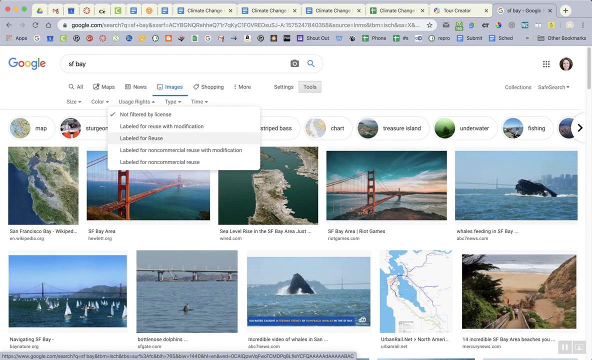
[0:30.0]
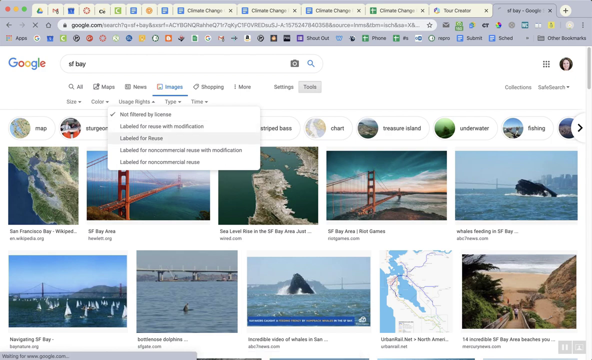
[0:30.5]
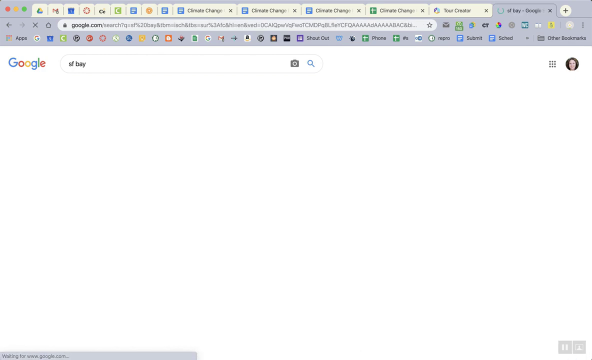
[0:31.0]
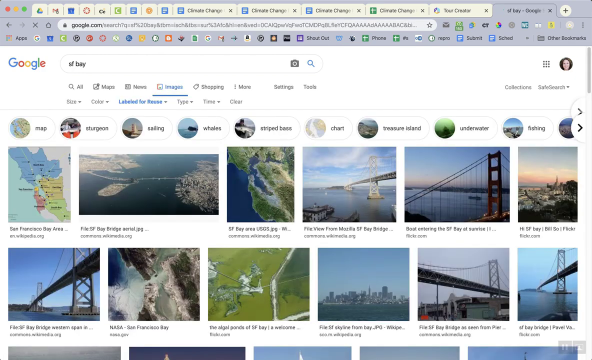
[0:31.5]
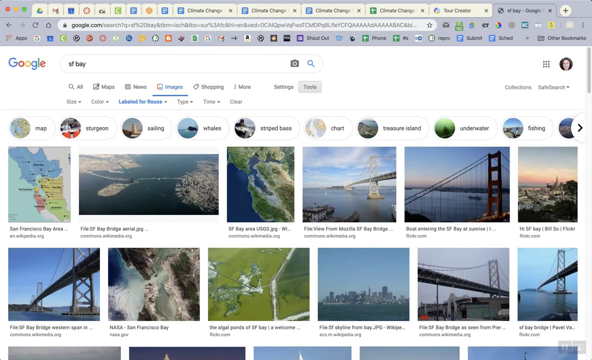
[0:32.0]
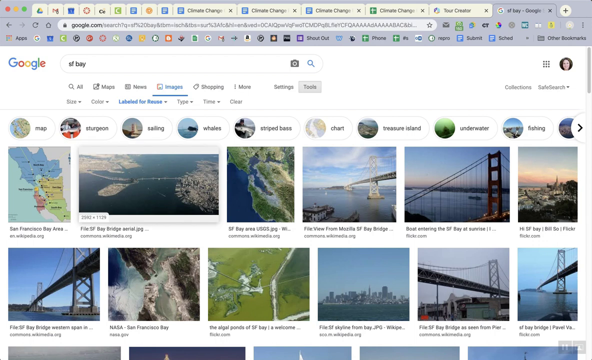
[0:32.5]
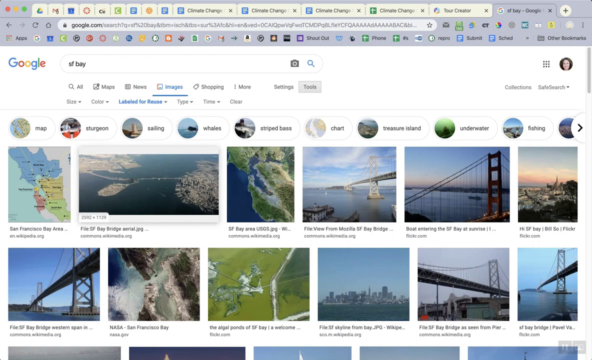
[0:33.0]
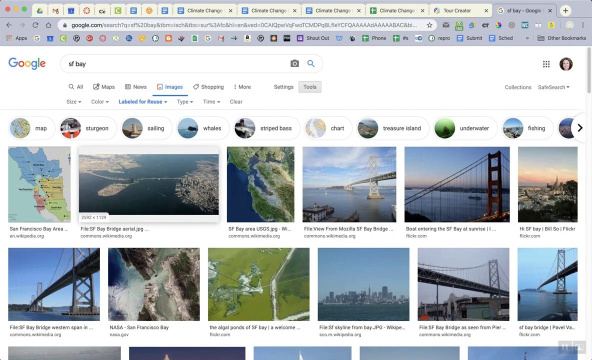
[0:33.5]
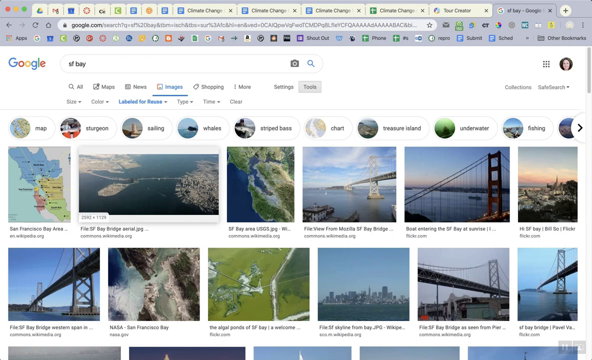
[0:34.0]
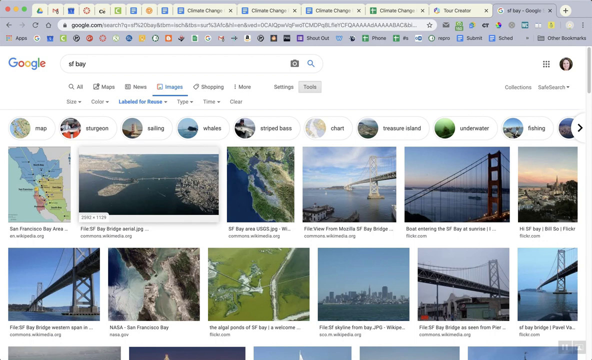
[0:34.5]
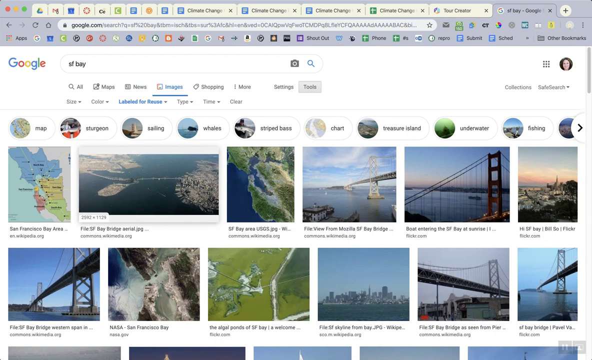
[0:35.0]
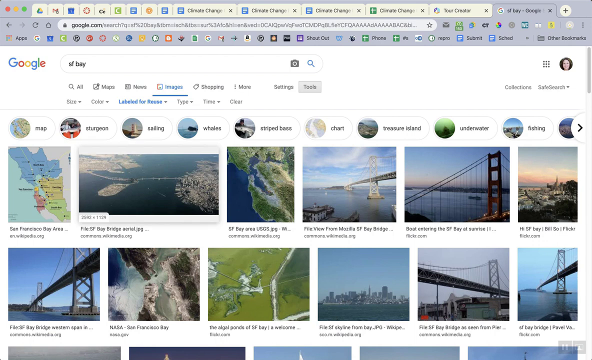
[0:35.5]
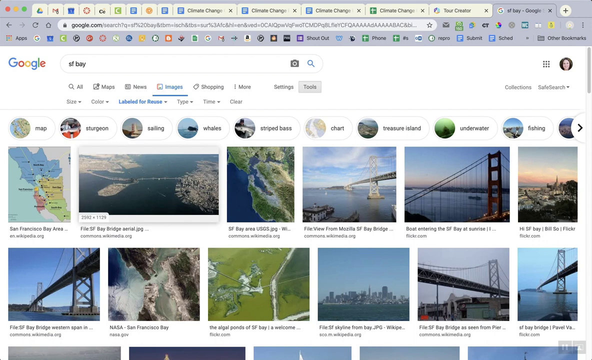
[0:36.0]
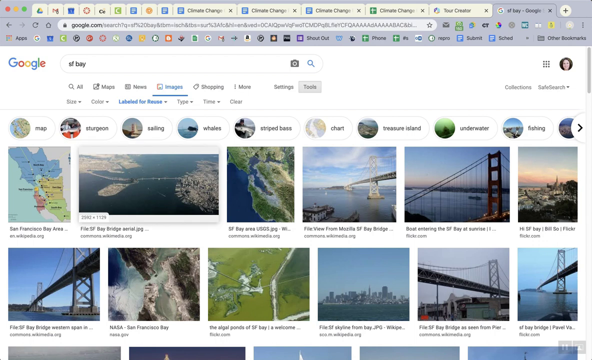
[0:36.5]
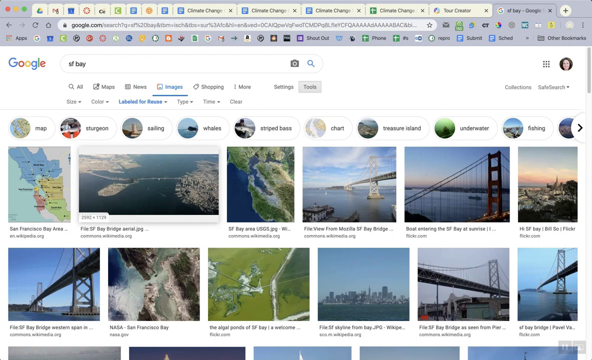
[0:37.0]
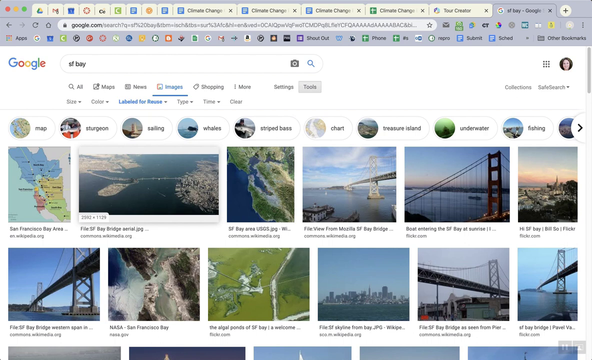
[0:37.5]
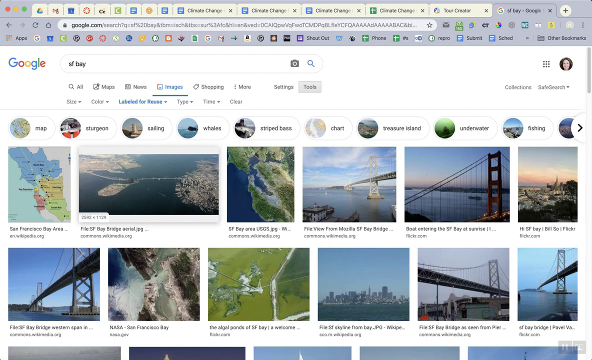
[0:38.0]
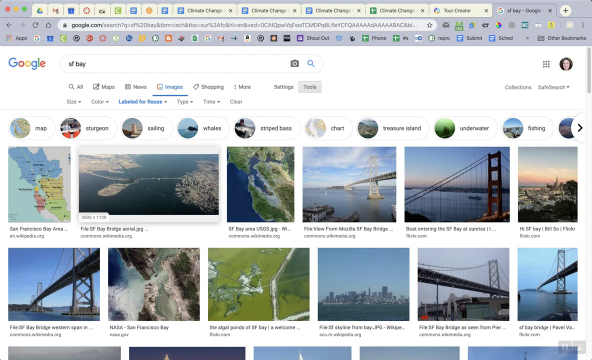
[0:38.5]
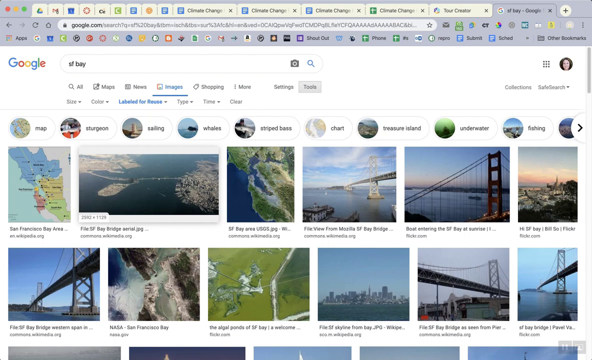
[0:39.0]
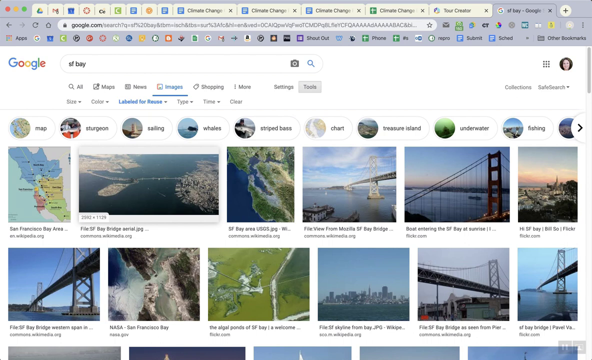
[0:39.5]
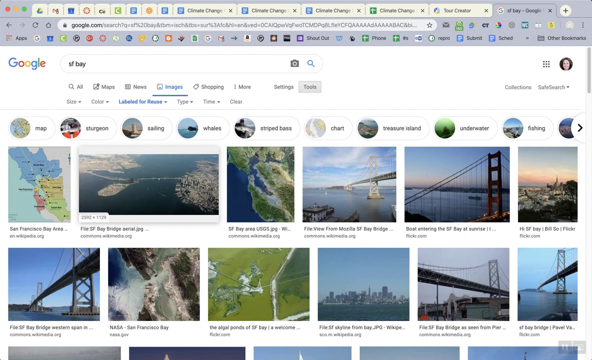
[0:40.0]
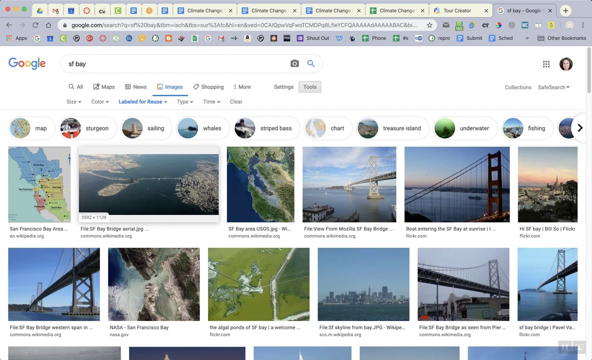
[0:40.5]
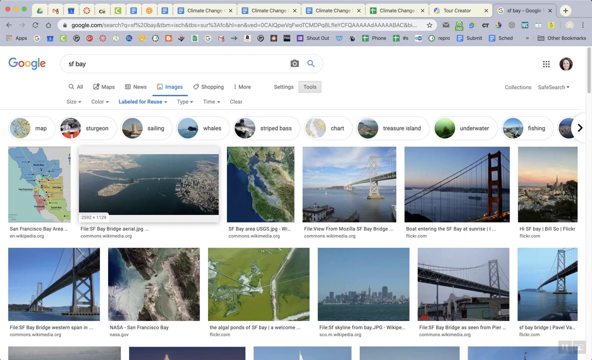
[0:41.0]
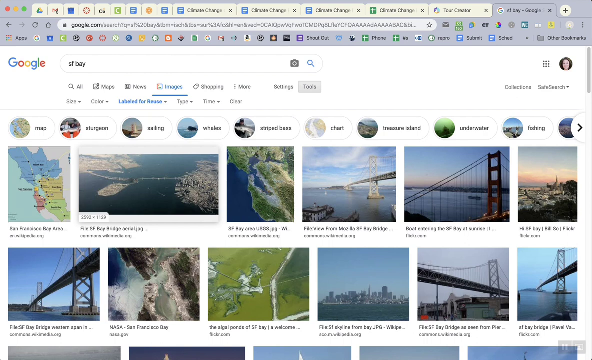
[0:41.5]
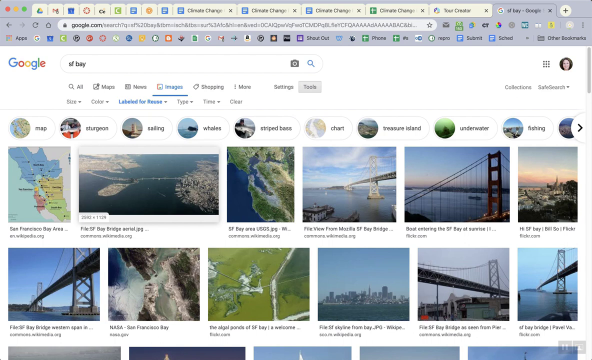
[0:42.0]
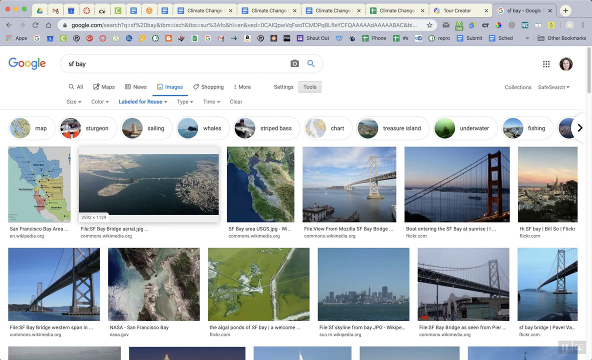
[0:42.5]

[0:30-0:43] It is unclear whether an option is actually selected for the license, but it looks like "labeled for reuse" is chosen, and the images are filtered down to those labeled for reuse. Not much else is shown after this. The video appears to demonstrate how to filter images by license, such as labeled for reuse.